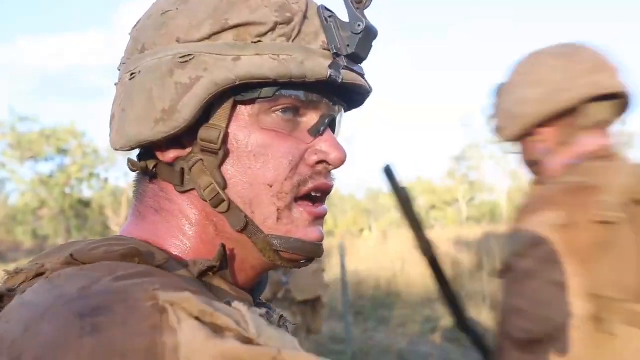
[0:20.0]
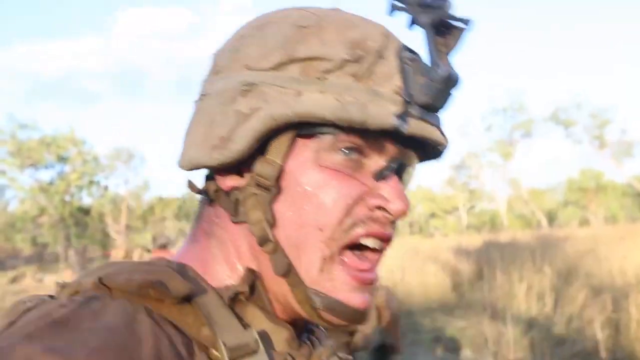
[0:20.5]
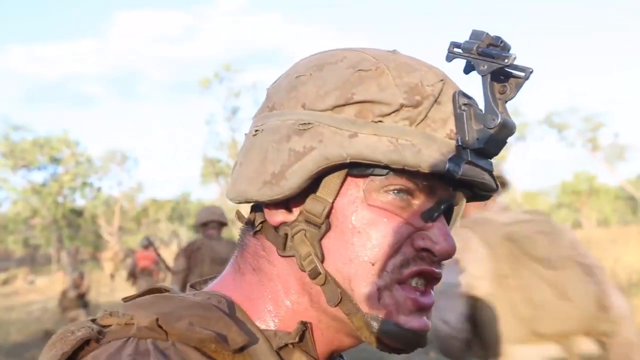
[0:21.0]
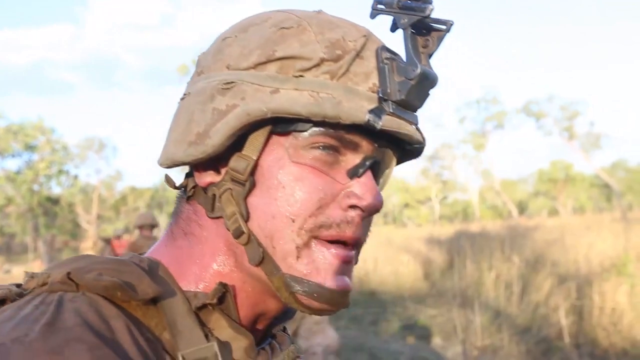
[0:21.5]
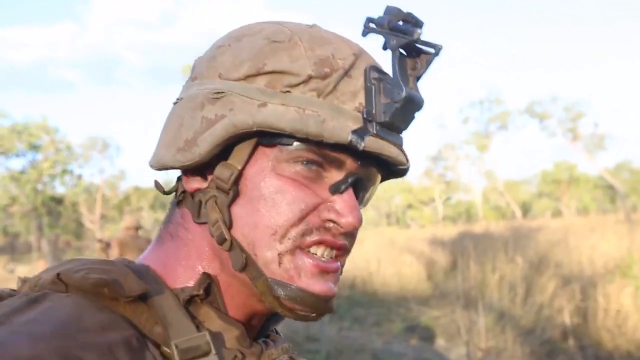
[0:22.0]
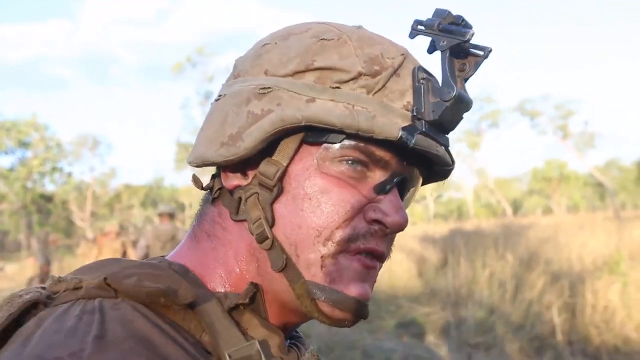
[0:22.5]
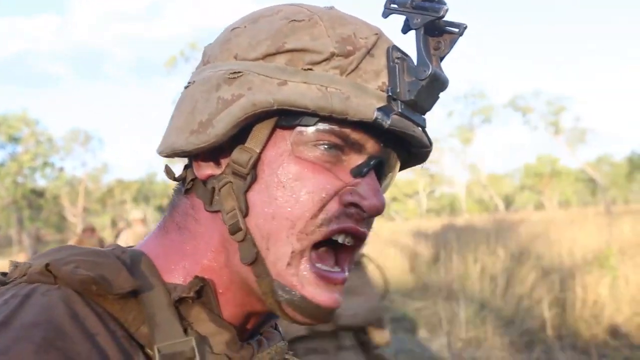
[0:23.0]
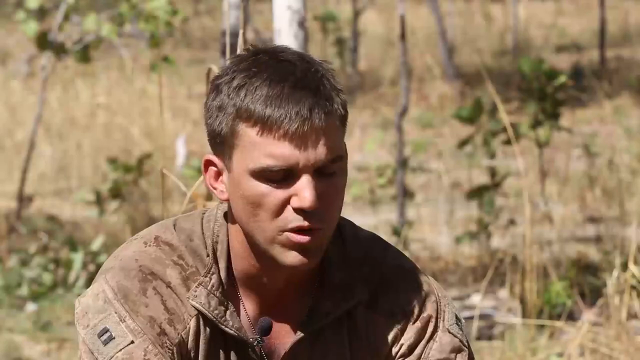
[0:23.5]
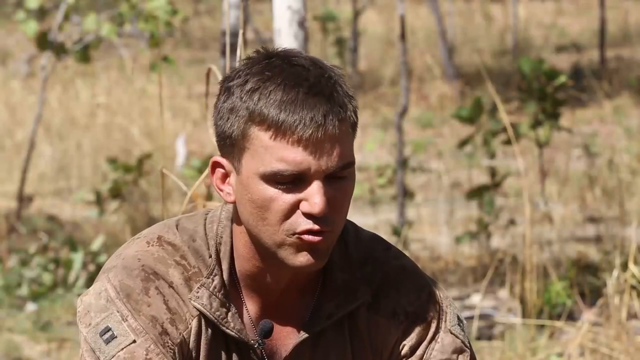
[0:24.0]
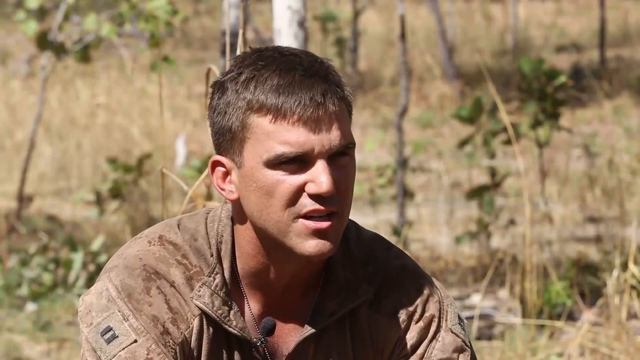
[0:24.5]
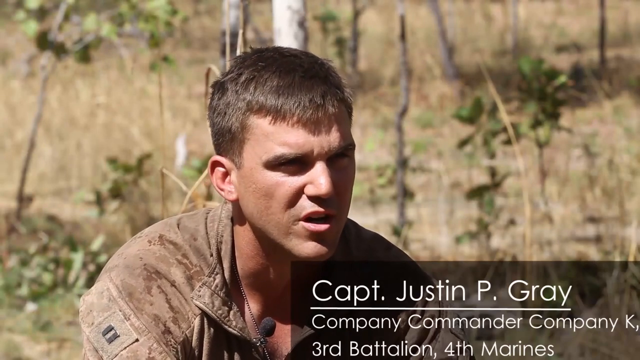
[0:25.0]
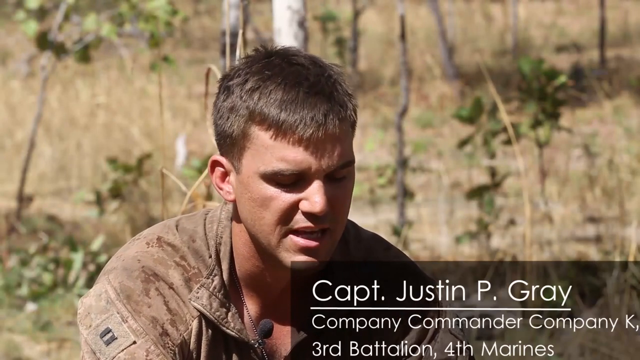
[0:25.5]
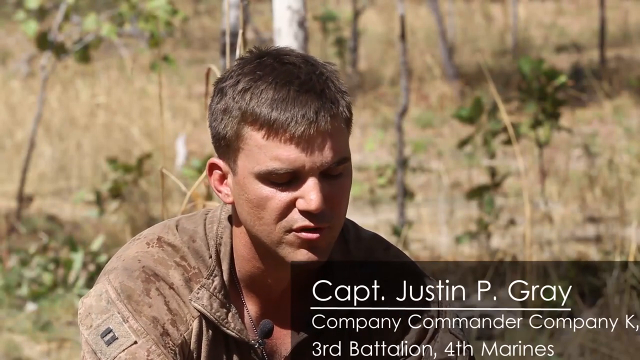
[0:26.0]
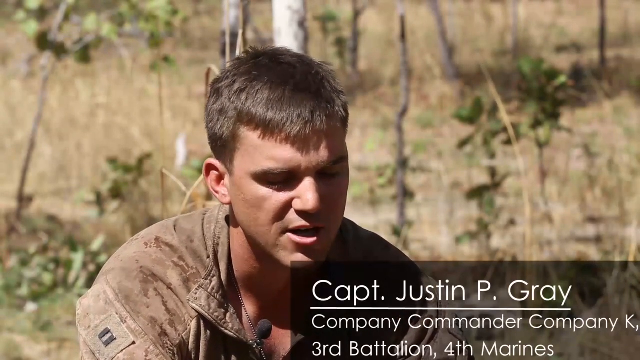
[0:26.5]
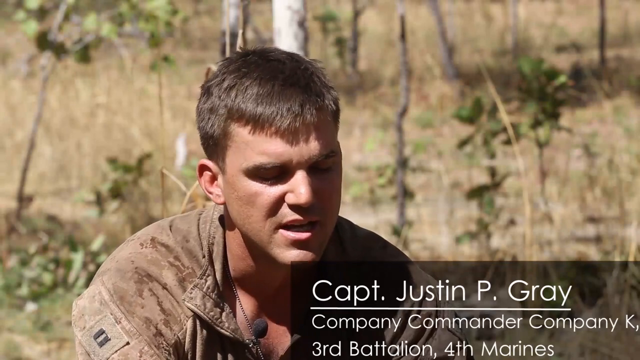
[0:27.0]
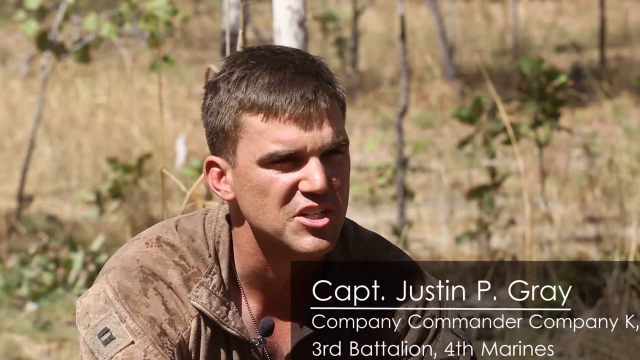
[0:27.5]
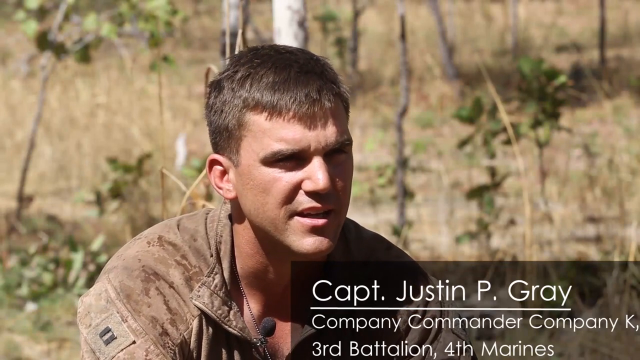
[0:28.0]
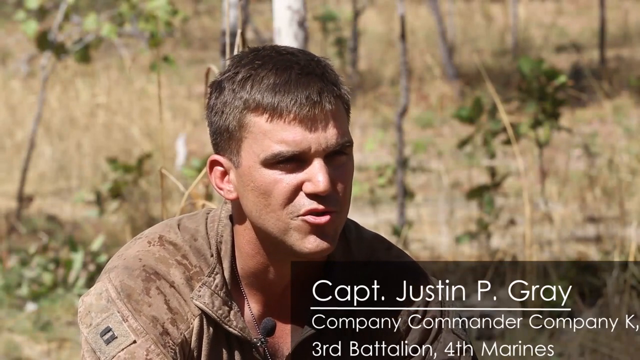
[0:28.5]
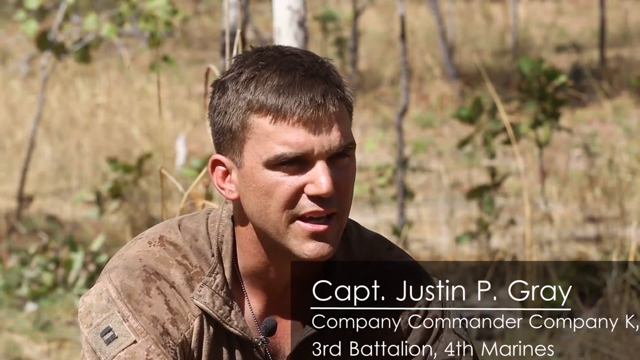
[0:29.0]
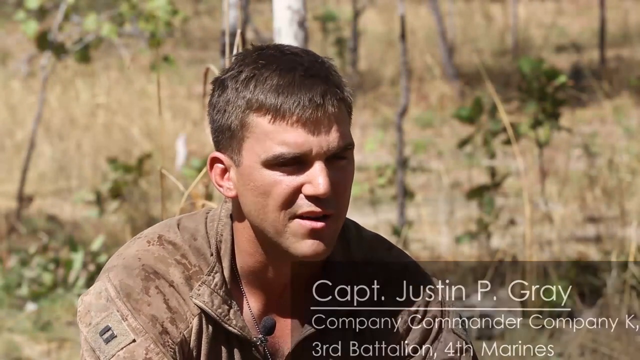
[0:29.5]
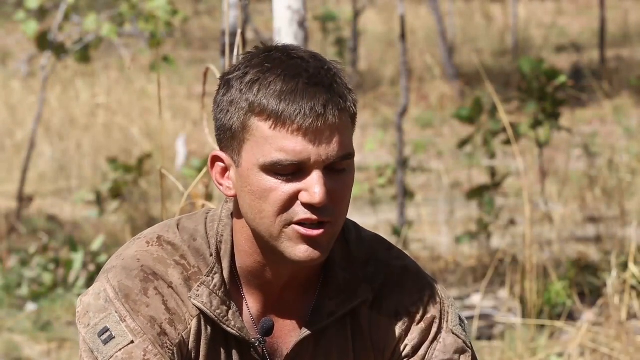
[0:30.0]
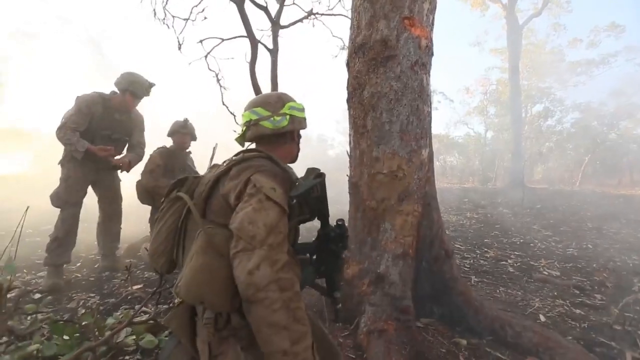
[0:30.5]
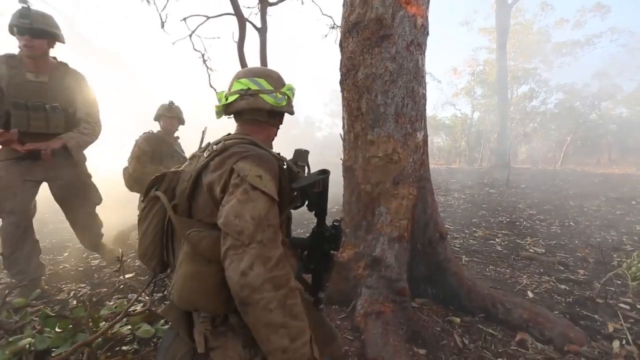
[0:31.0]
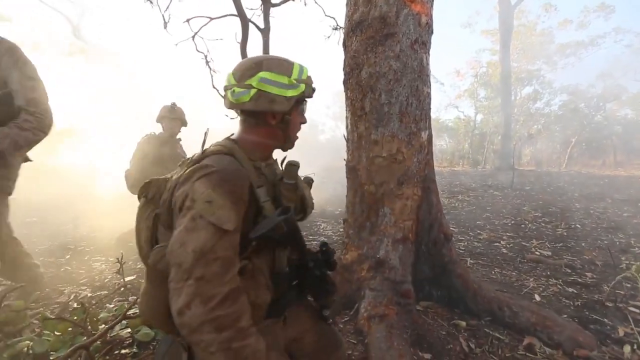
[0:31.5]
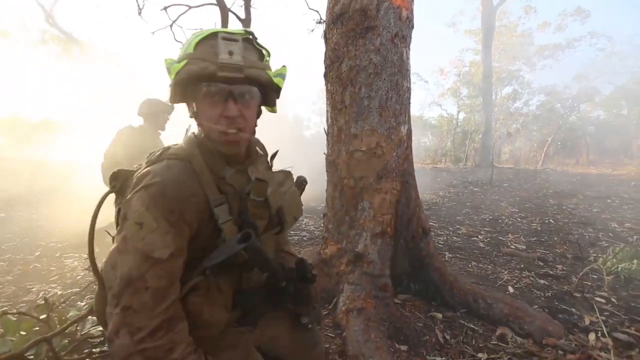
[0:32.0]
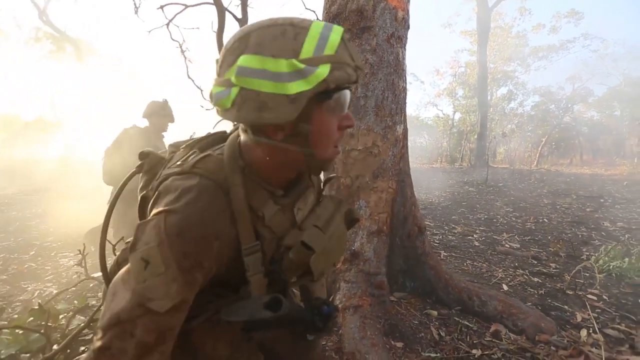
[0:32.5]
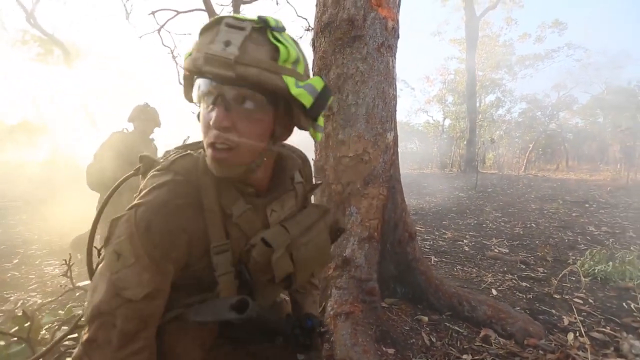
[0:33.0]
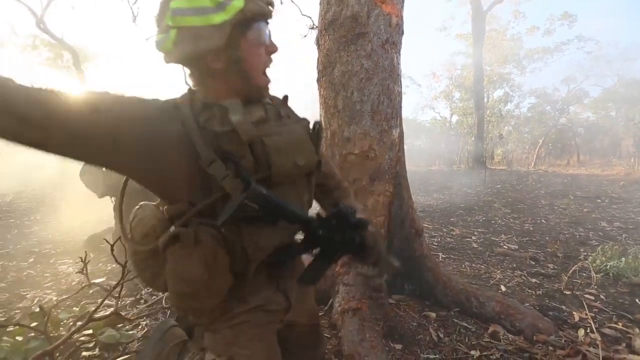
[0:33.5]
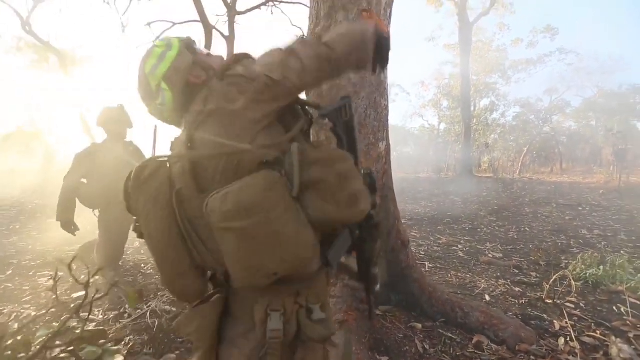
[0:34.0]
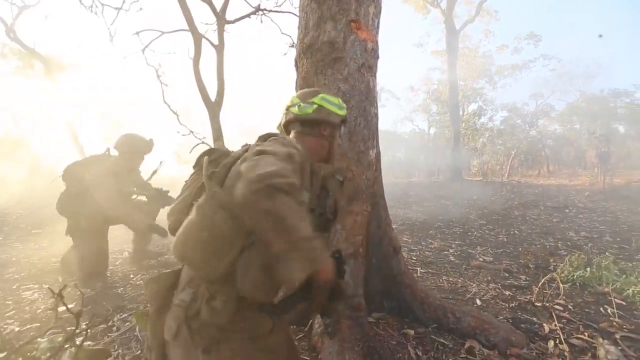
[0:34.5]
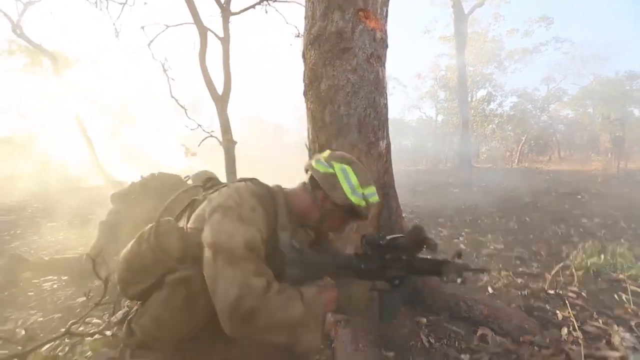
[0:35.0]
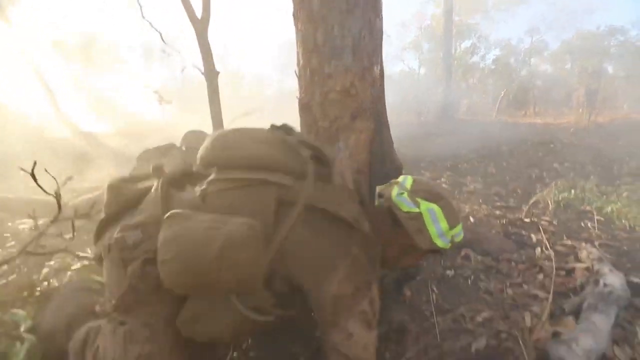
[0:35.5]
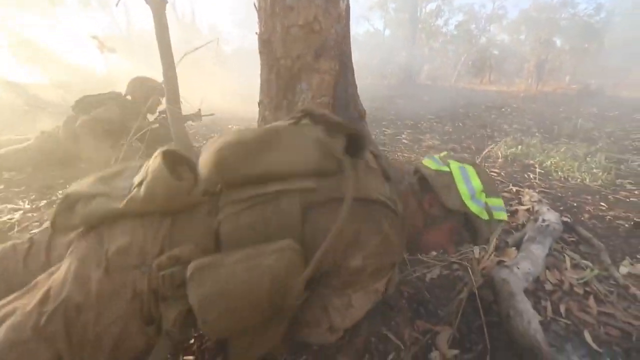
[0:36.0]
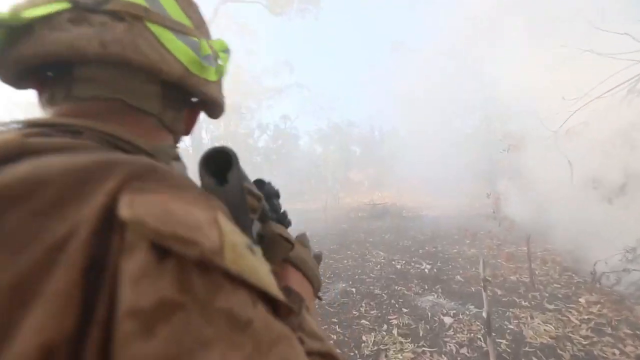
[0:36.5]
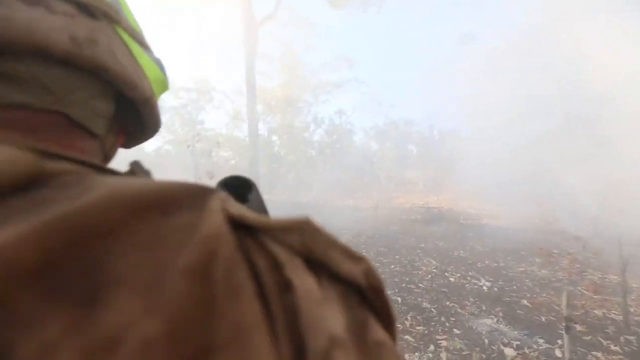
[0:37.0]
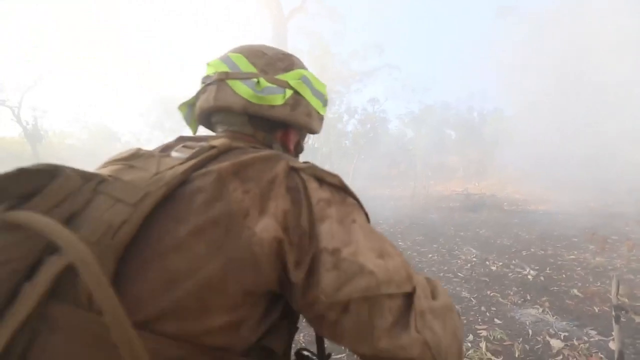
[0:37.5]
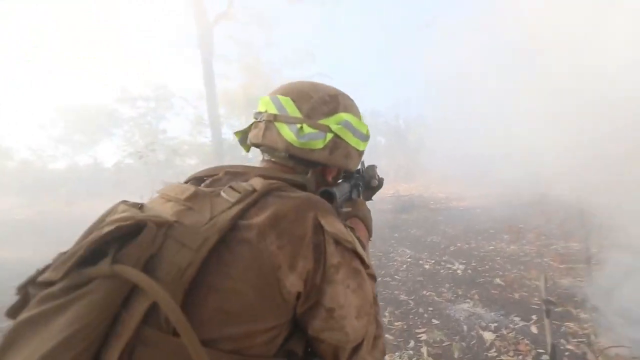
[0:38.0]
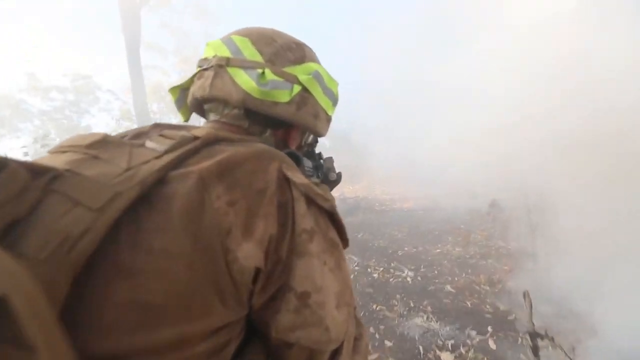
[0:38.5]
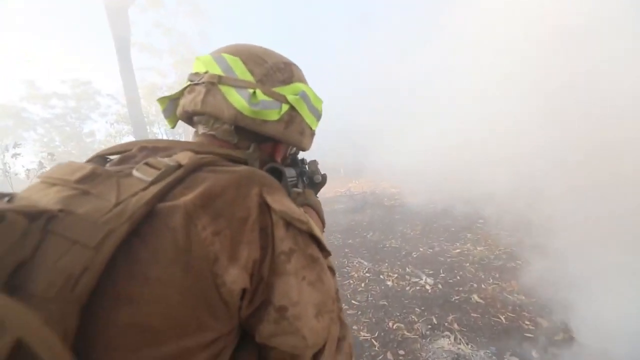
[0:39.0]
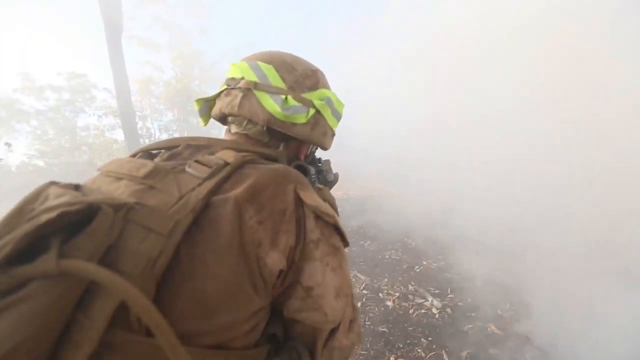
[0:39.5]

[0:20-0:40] The man looks like he is screaming for the other men to run when they start walking. Captain Justin Gray, company commander of Company K, is shown speaking to reporters. One man throws some type of weapon like a grenade, and the others all hit the ground on their stomachs when it is thrown. Afterward they get up and run toward the area where he threw it. The ground has a lot of dry covering, and there is a lot of smoke. The men hold their weapons up so they can look into the sight down the barrel, keeping the weapons pointed in the direction they are heading as they walk. The view returns to the main close-up of the man's right profile, while another man walks in front toward him, from the right corner up toward the left corner. The man in profile wears clear glasses and a helmet, and it looks like he could have a camera on the front of the helmet.